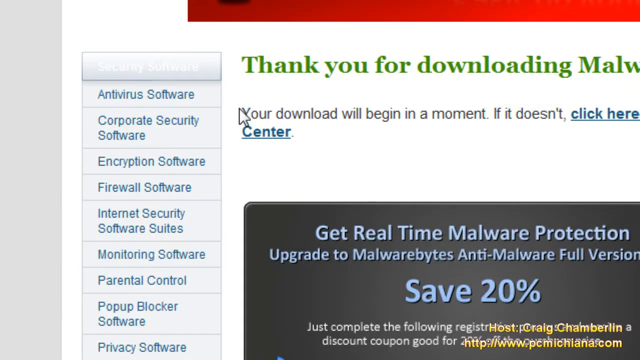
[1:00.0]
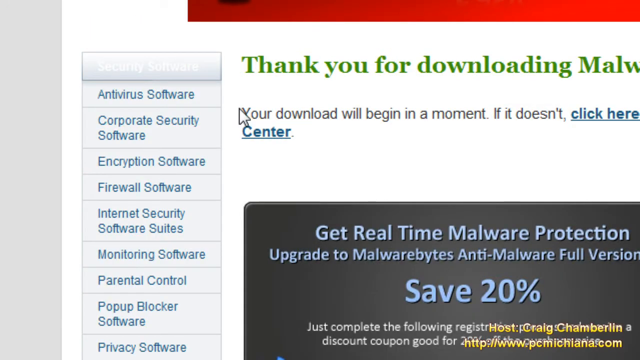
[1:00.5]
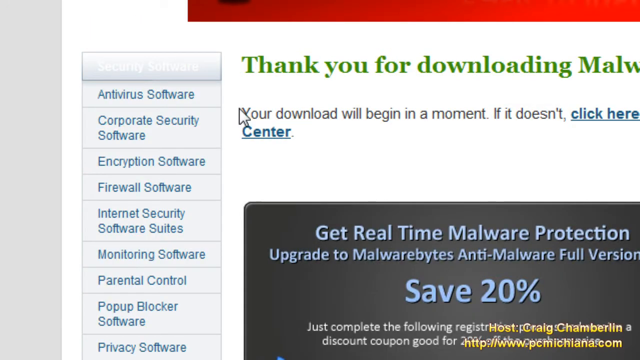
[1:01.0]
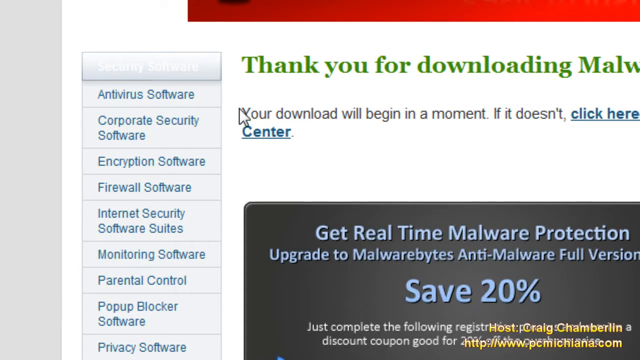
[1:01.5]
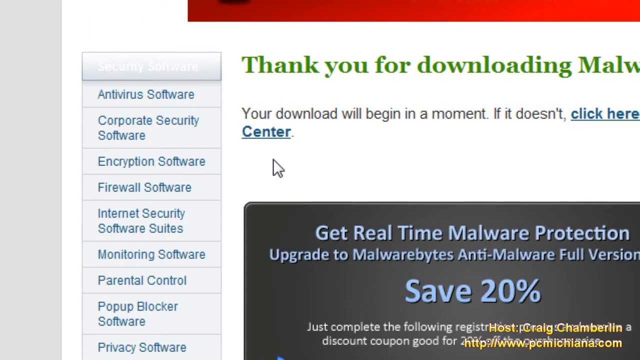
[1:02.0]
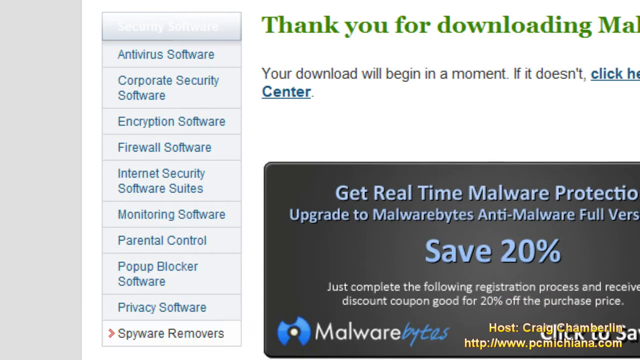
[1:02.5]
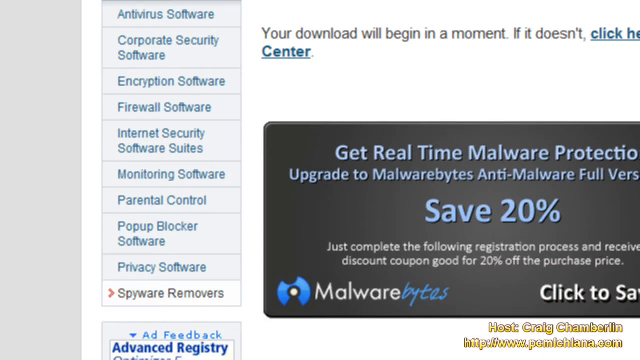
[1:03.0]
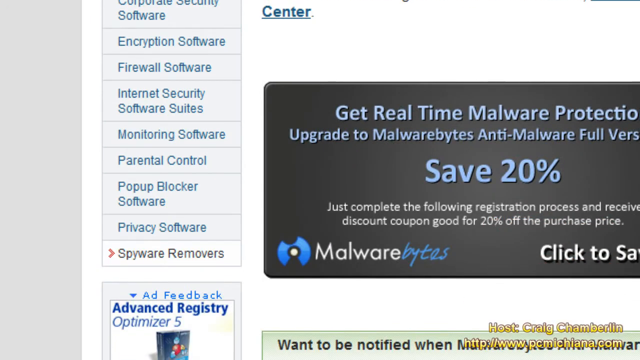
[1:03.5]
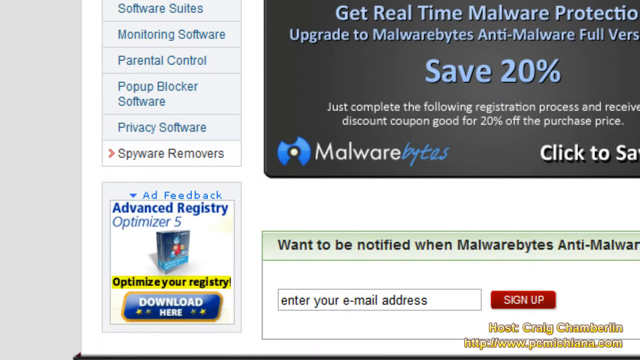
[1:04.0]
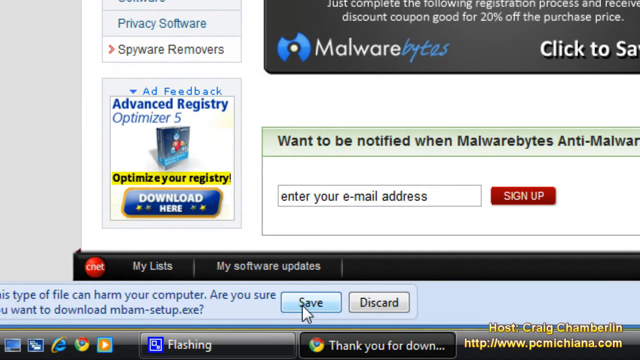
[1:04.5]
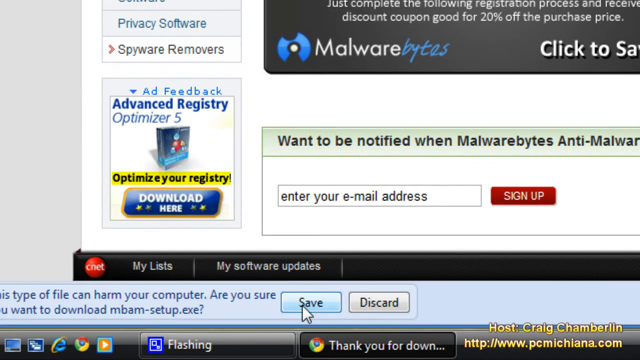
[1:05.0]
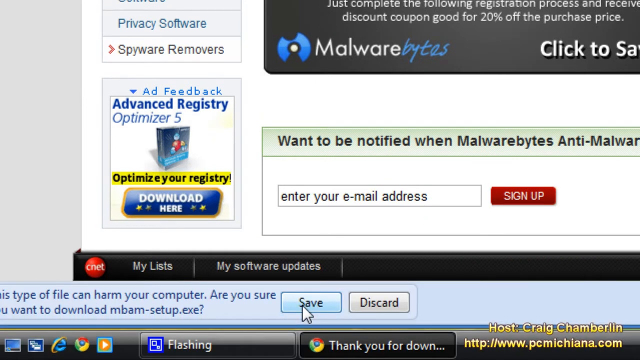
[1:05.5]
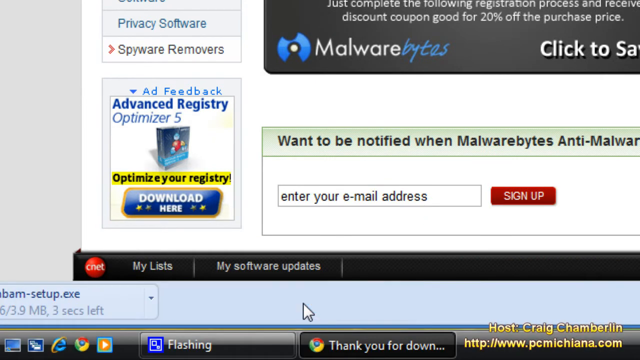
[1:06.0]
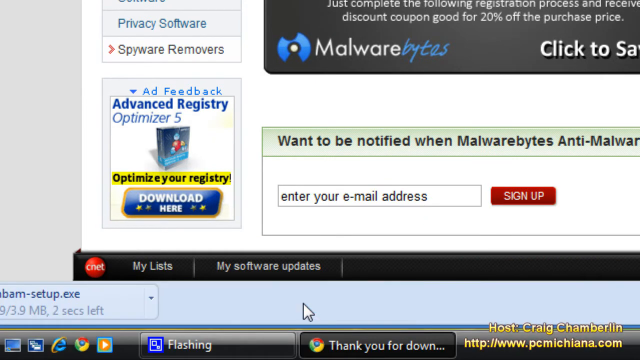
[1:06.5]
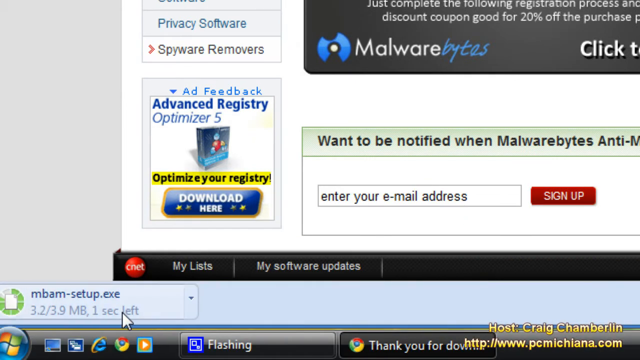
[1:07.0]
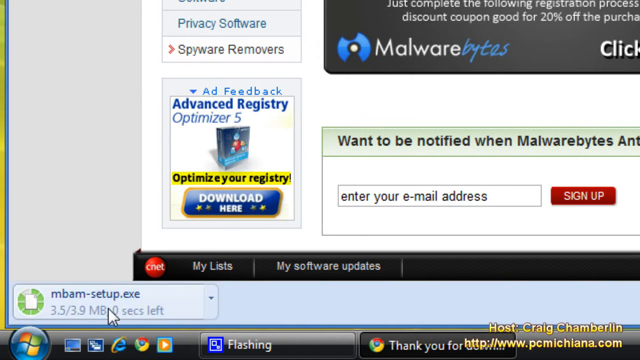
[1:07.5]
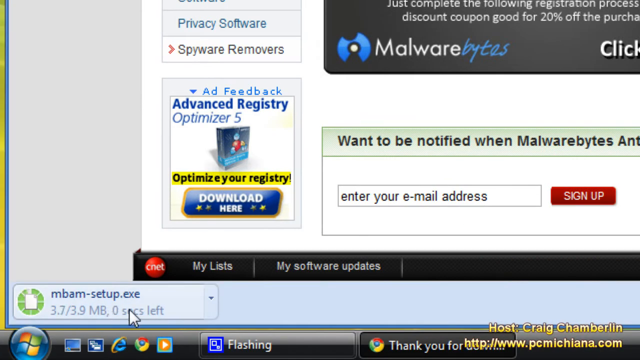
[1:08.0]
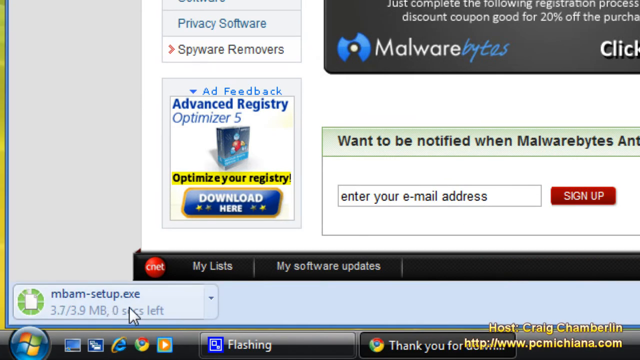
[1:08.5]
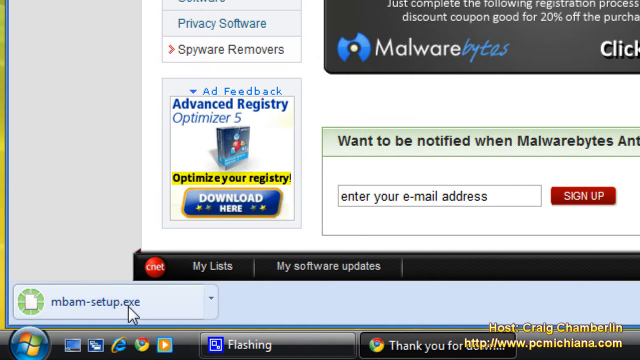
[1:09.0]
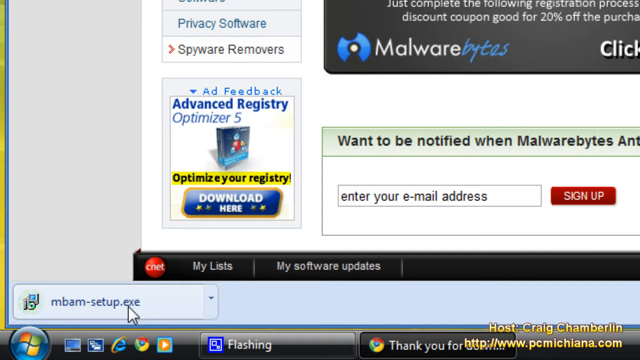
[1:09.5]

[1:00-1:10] The screen says "thank you for downloading", and a .exe file is shown. The text is in English. A drop-down menu on the left side offers options including encryption software, firewall software, internet security monitoring software, parental control and privacy software. "20%" is shown in the middle of the screen.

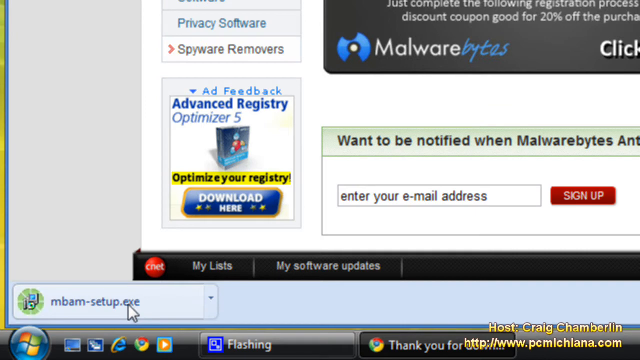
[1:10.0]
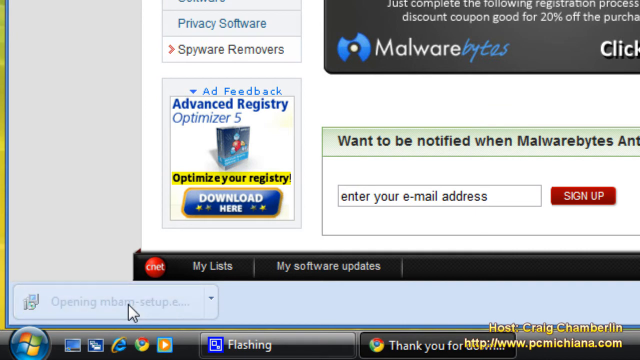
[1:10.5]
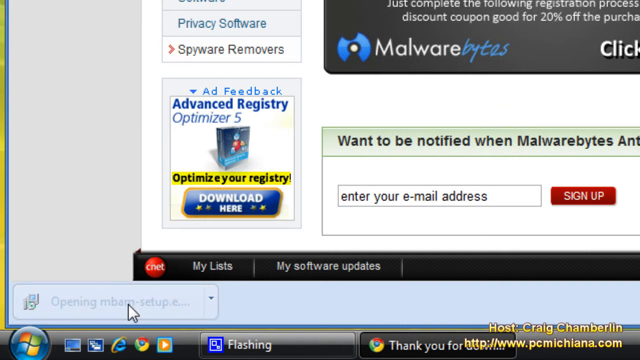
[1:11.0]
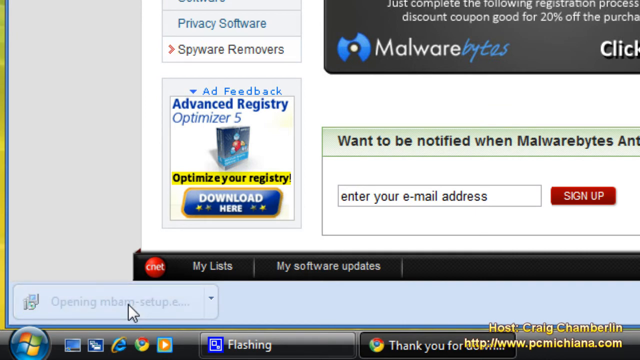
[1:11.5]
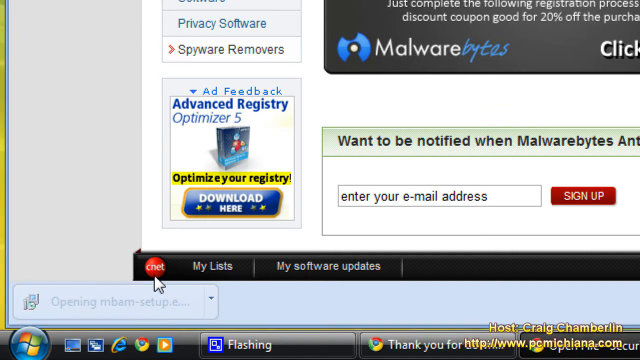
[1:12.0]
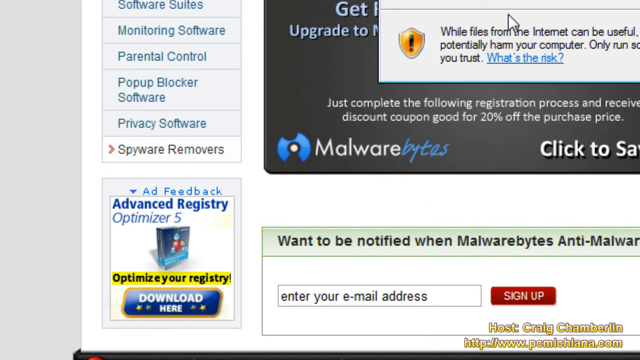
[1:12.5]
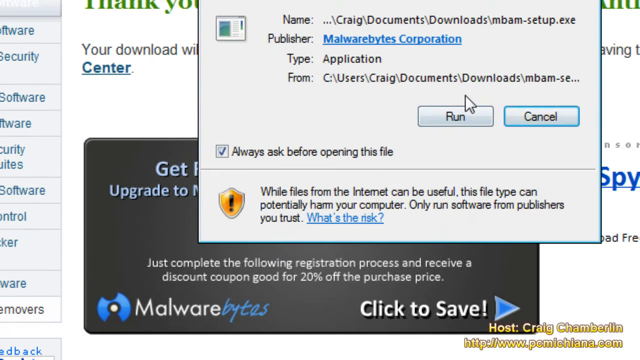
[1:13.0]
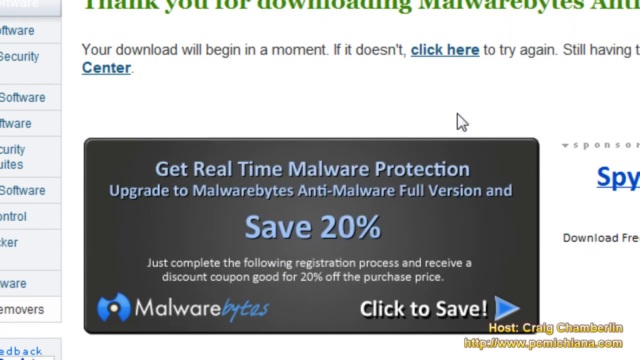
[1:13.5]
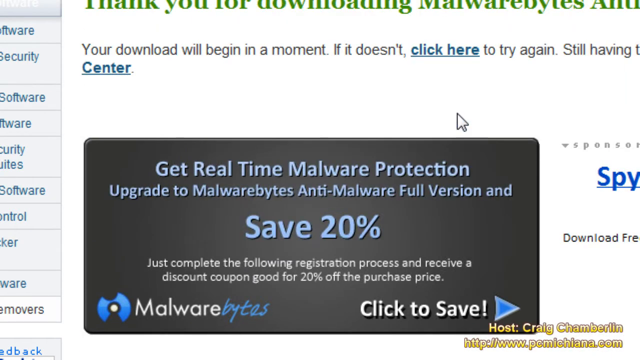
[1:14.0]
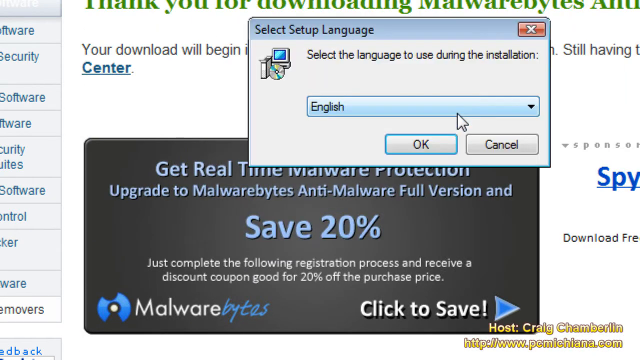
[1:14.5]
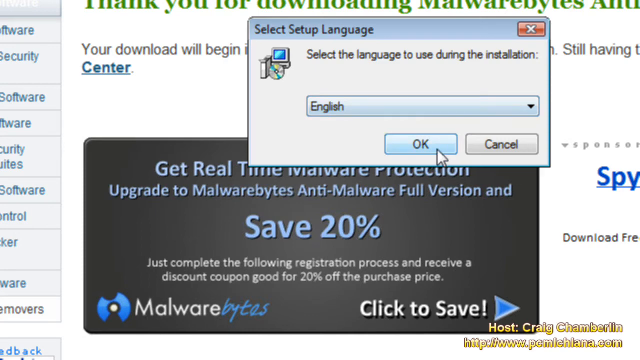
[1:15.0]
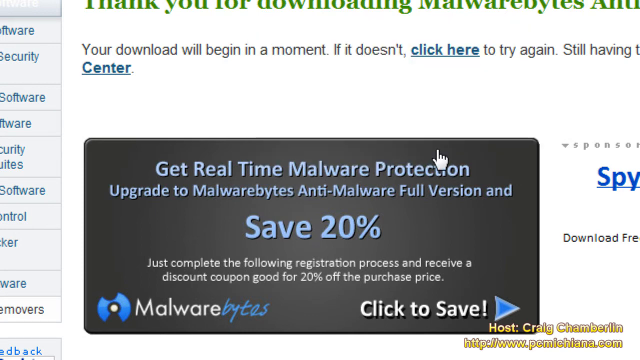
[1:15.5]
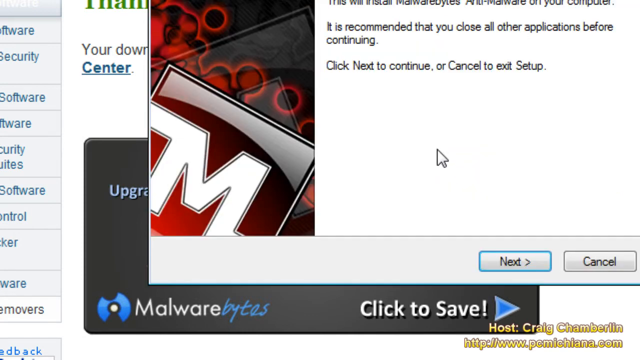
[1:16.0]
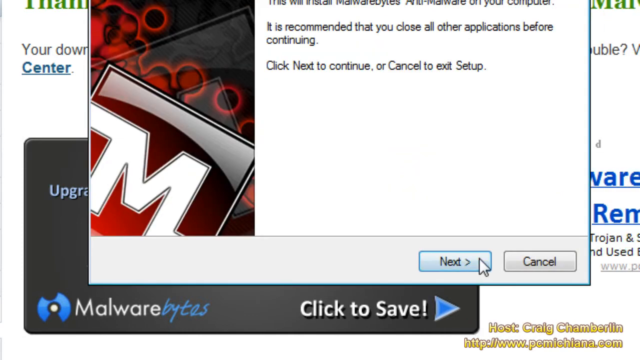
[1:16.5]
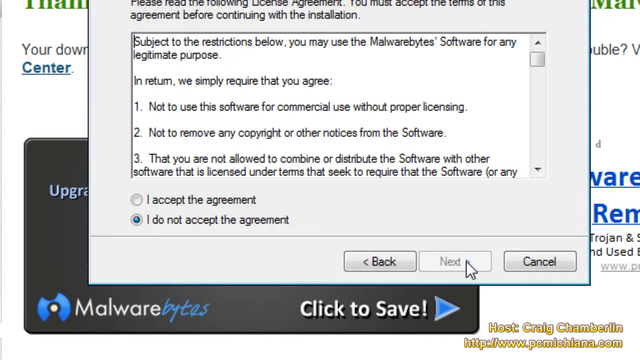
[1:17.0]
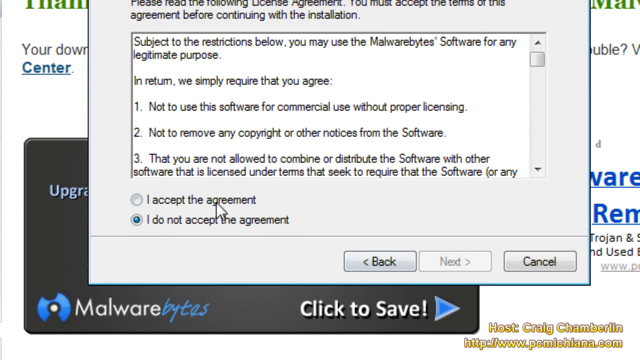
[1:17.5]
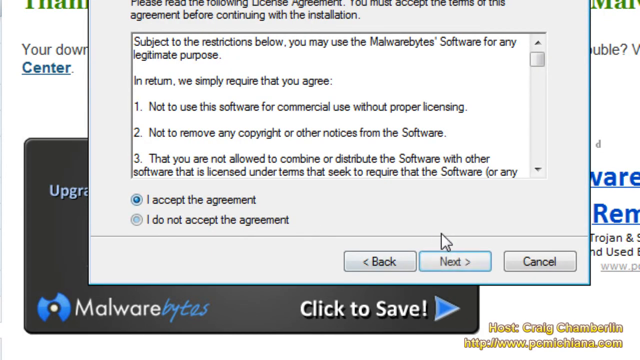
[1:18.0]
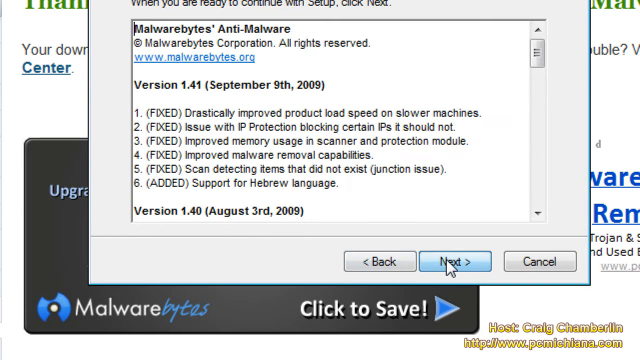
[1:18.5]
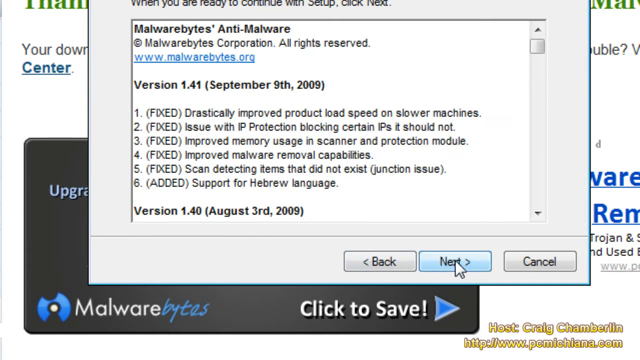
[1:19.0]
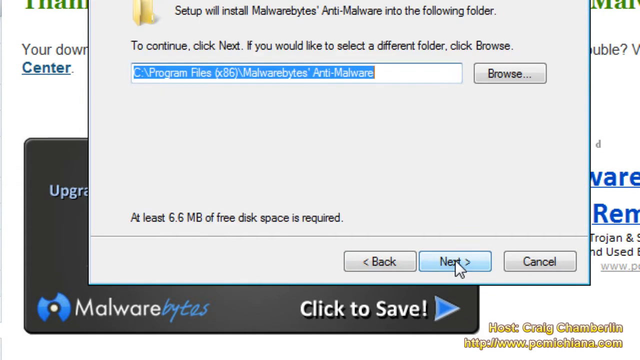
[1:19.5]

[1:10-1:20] A setup screen for running the software gives a language option, with English chosen, and an option to accept the agreement. The agreement is a bullet-point list of claims, with an "accept the agreement" button at the bottom of the screen.